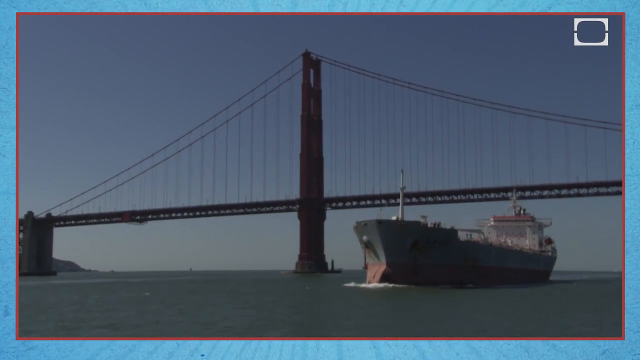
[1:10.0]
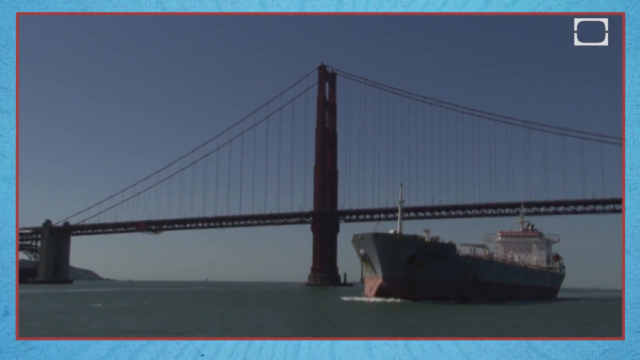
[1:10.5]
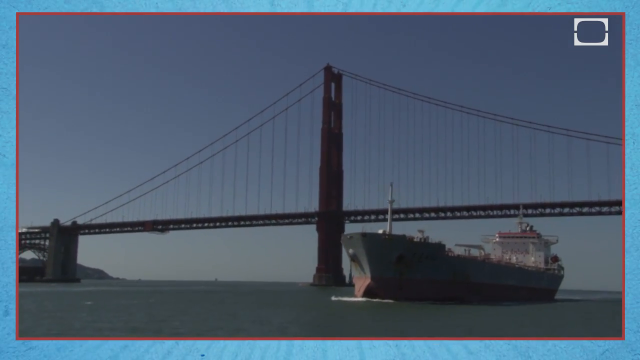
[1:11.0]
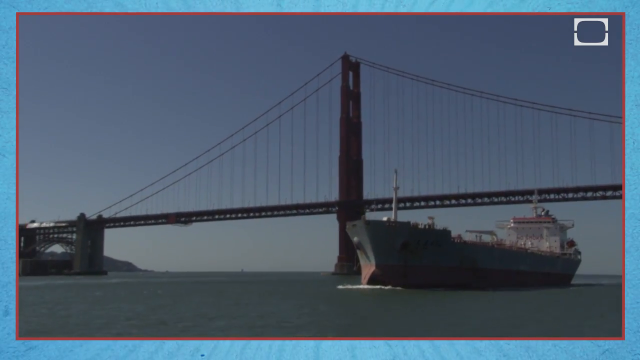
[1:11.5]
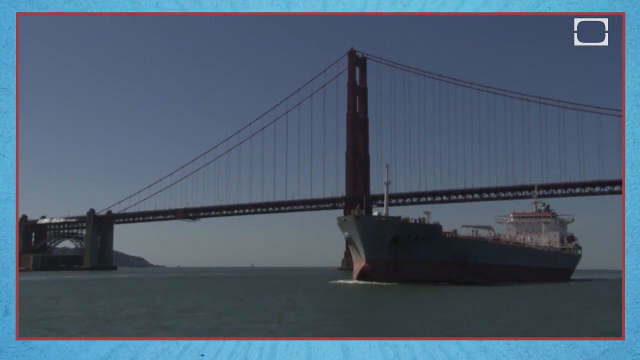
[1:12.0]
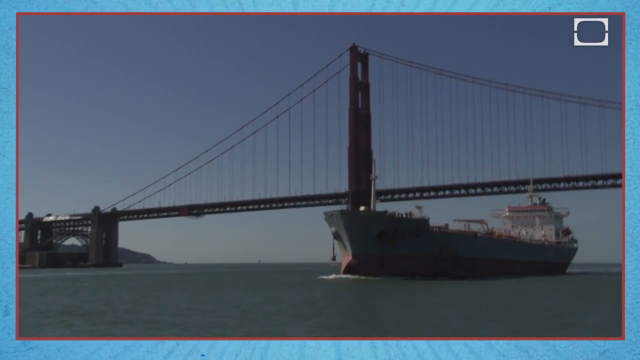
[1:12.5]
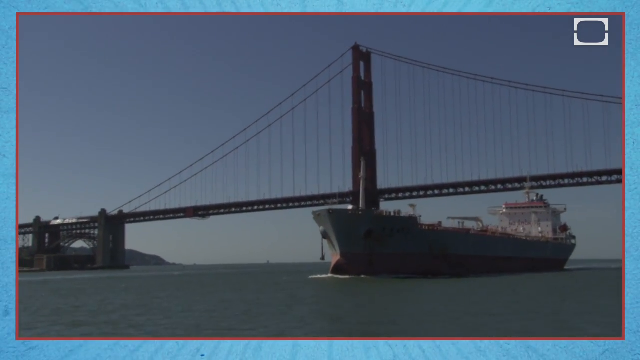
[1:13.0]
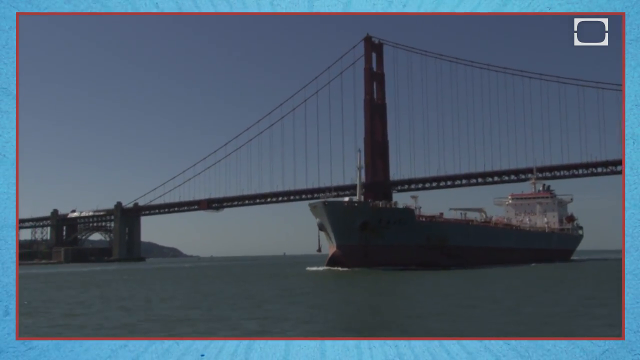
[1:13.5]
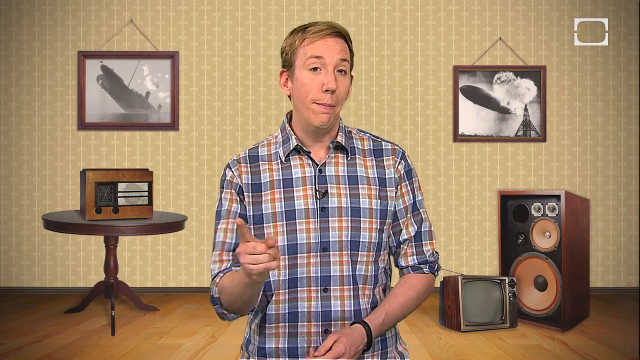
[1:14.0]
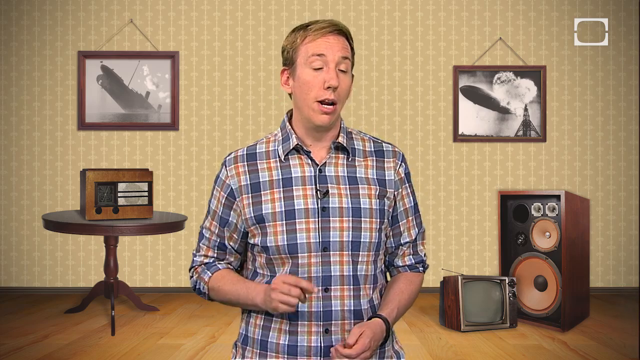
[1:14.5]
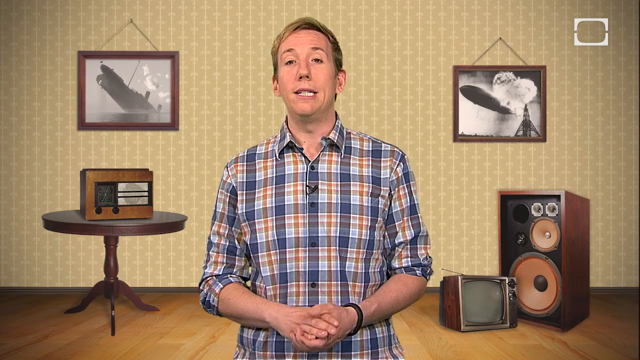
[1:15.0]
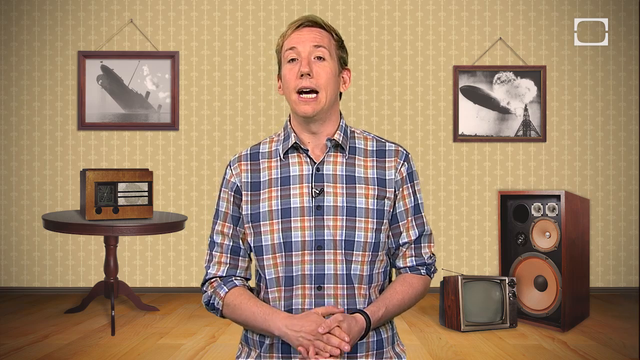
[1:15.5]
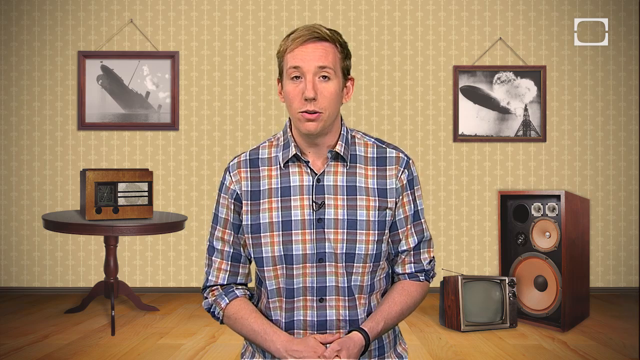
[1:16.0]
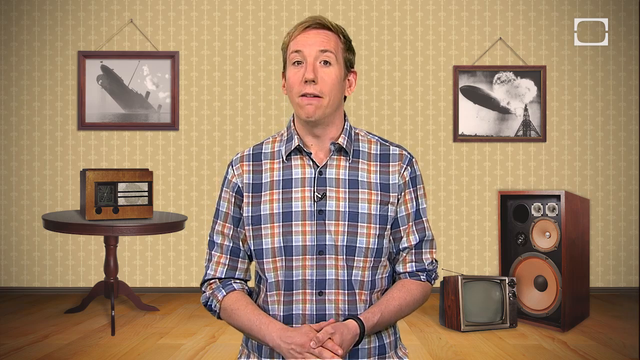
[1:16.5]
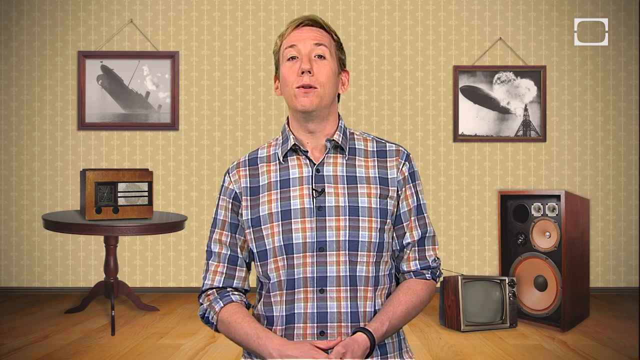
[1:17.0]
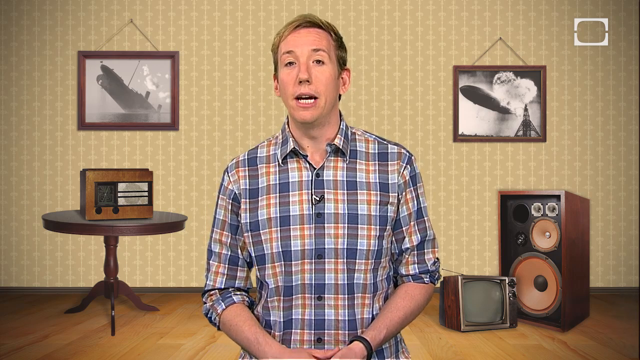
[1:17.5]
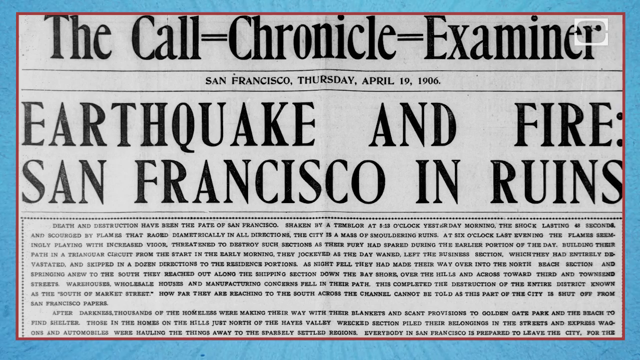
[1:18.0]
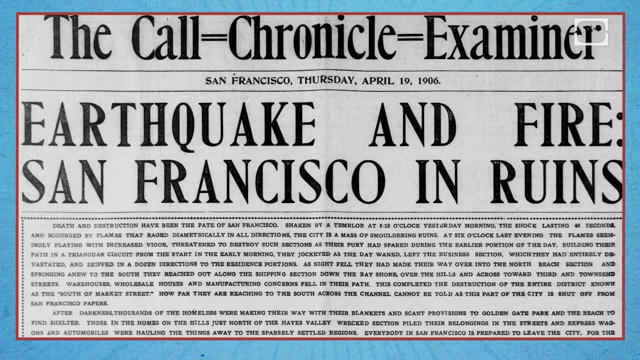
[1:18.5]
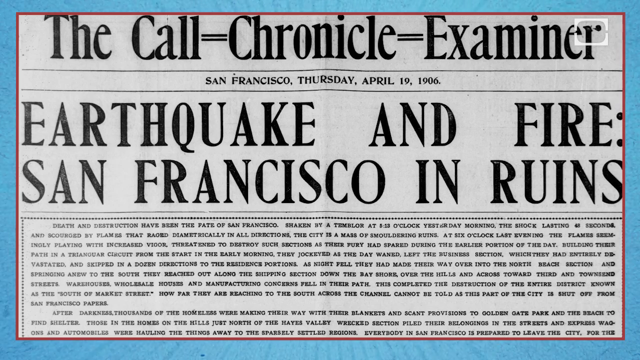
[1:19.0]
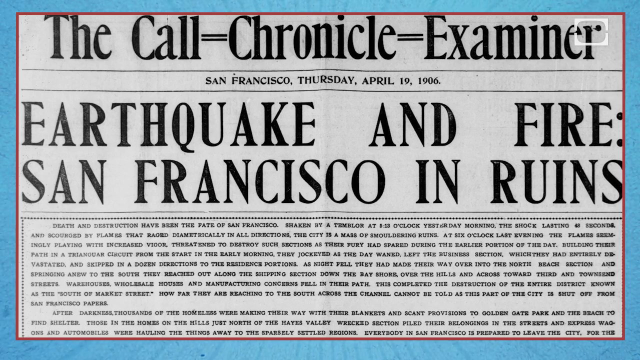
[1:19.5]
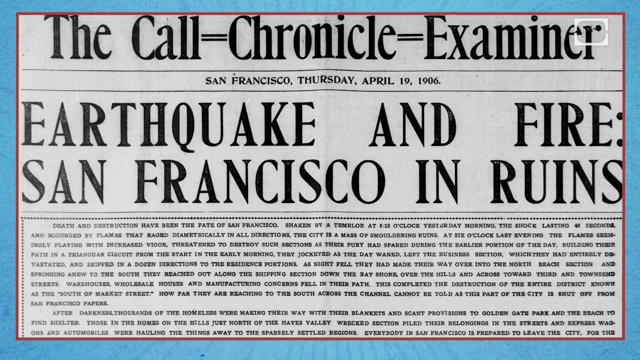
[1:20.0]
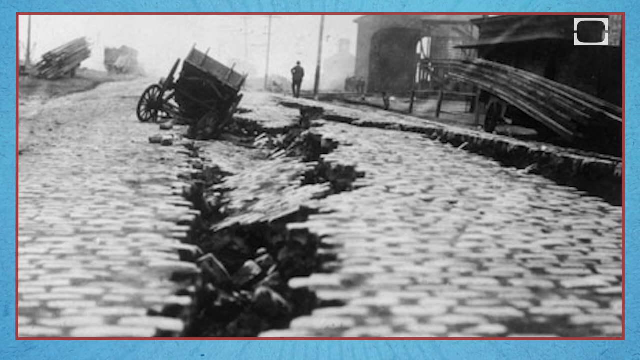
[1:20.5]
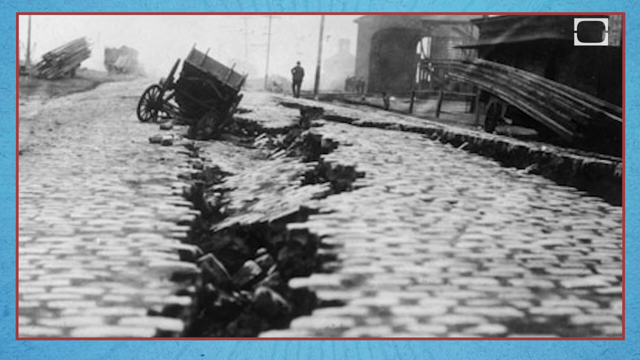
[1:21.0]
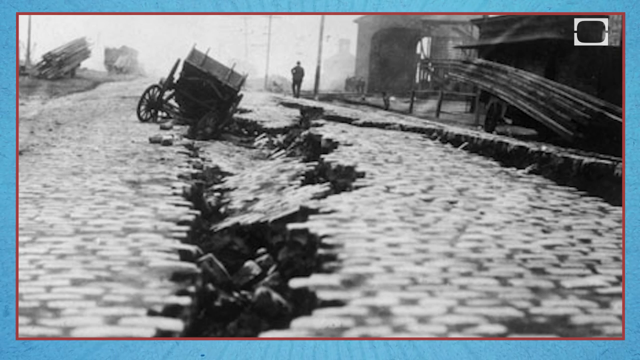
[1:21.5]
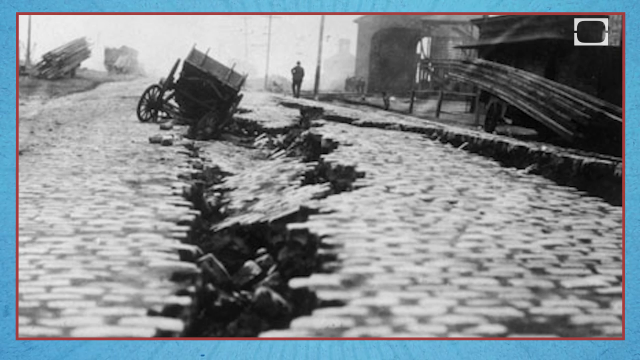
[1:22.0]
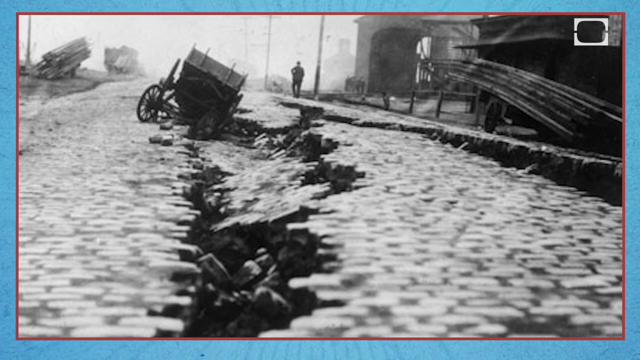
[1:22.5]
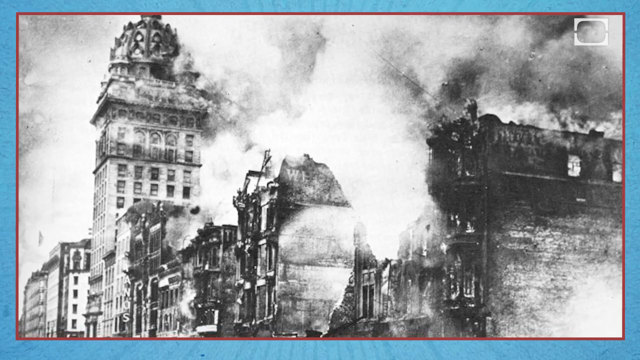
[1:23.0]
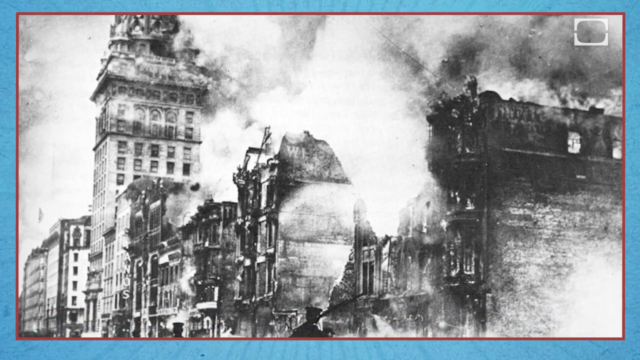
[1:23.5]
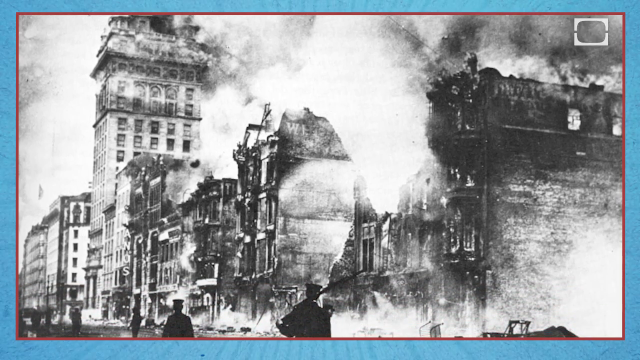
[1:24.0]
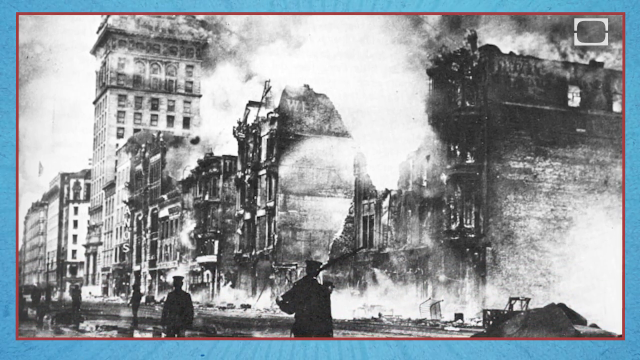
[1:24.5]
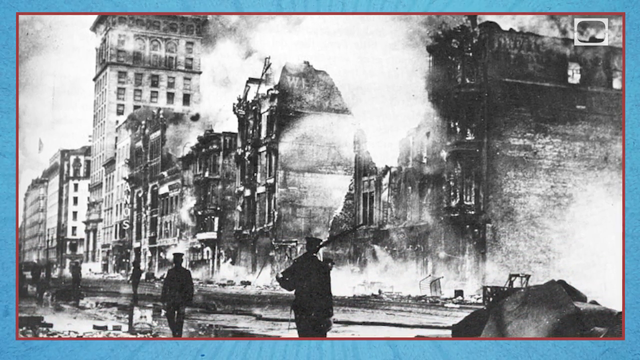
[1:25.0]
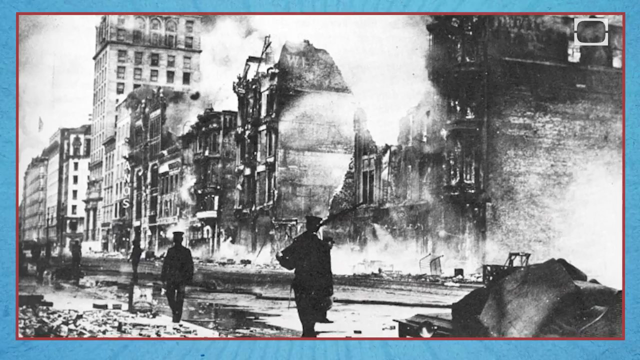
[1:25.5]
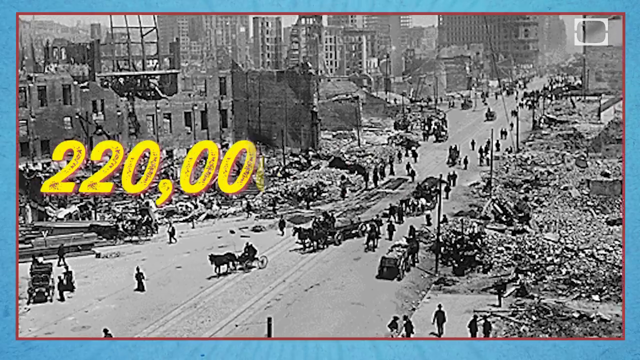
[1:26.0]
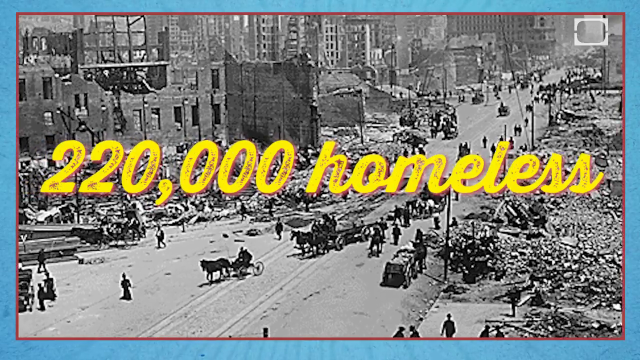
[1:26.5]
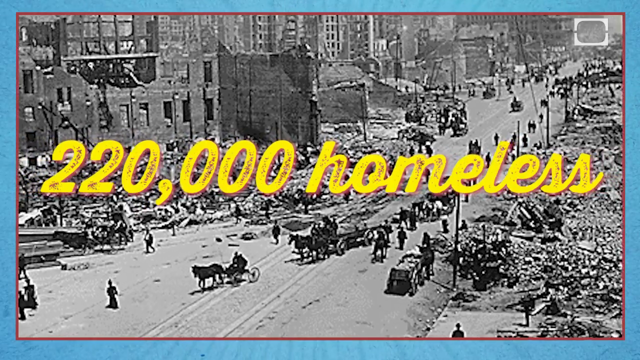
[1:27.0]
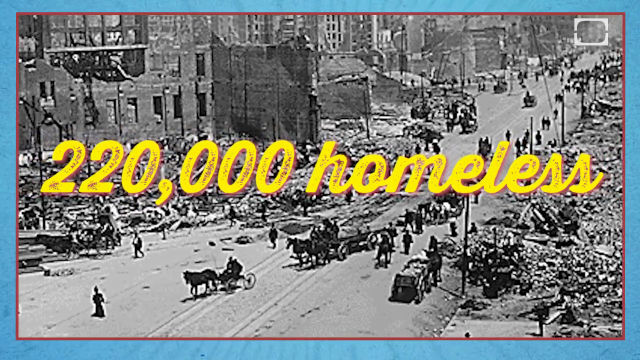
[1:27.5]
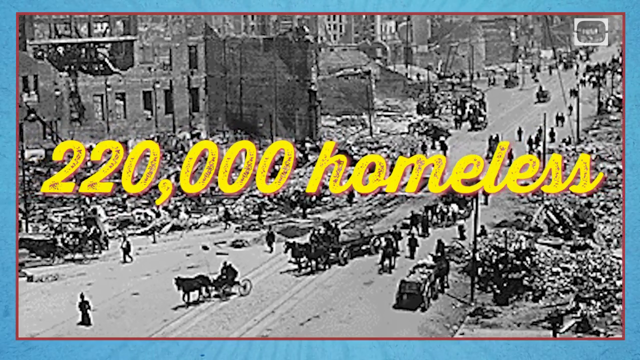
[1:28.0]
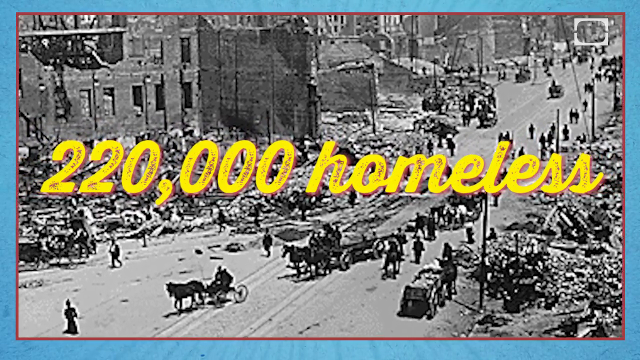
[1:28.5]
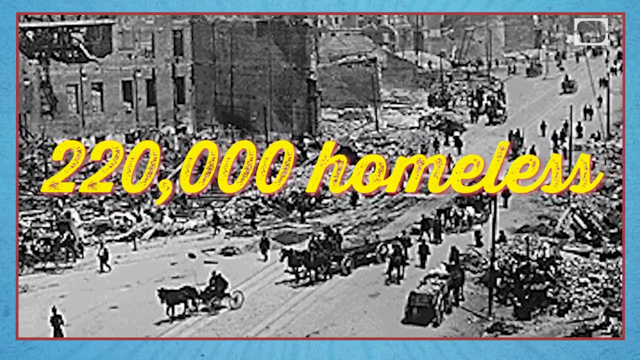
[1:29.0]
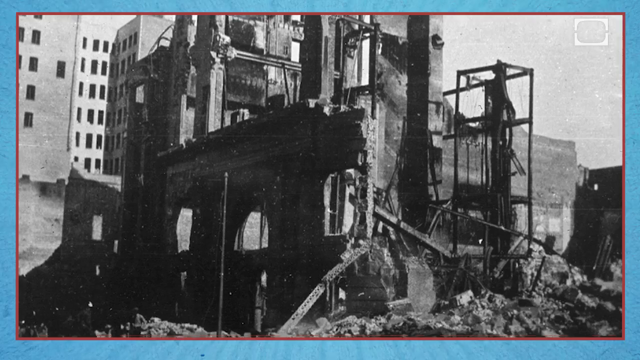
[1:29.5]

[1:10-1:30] The same boat goes across the ocean. It is extremely big, black in the top half and red in the bottom half, and it passes what looks to be the San Francisco bay bridge, which has a big archway that curves up and is very long. The video cuts to Scott again, and then to a giant blown-up image of a newspaper headline reading "the call Chronicle examiner," with a really long equal-sign-like mark between "call" and "Chronicle" and another between "Chronicle" and "examiner." After that come pictures of what looks like the aftermath of a big earthquake, including a giant crack in the earth splitting the ground in half. Text then gives a stat: "220,000 homeless."